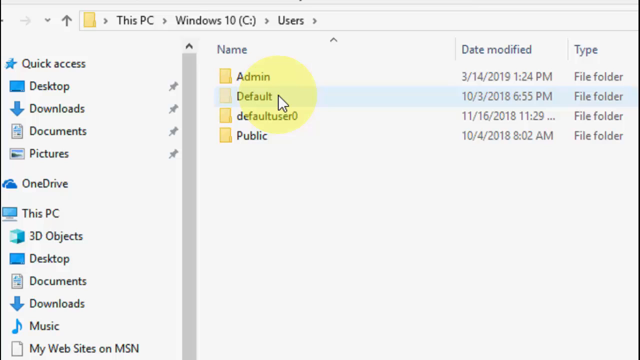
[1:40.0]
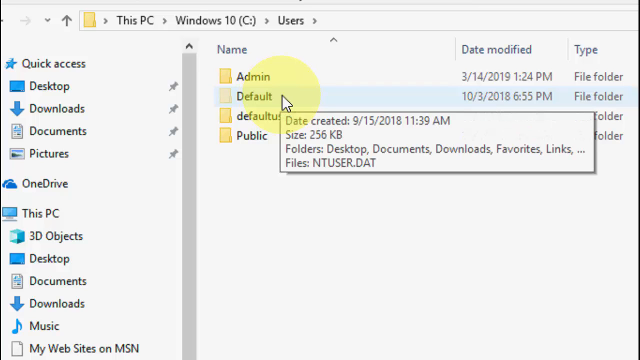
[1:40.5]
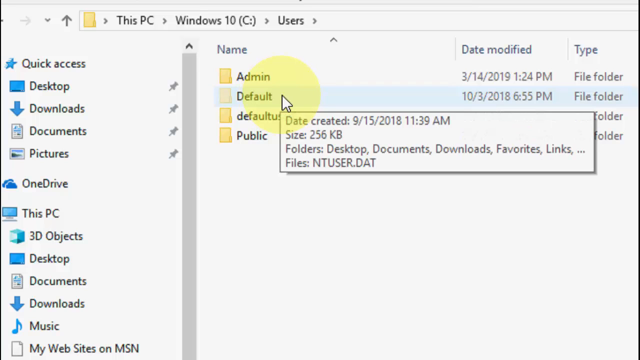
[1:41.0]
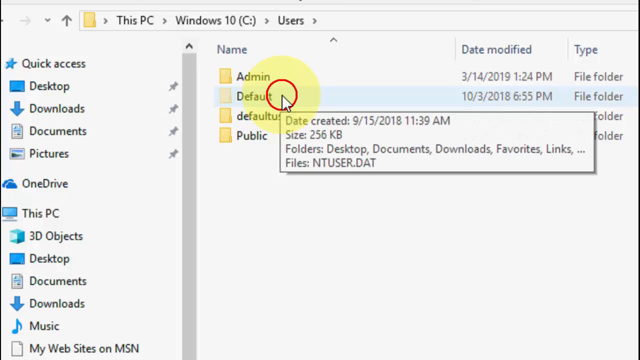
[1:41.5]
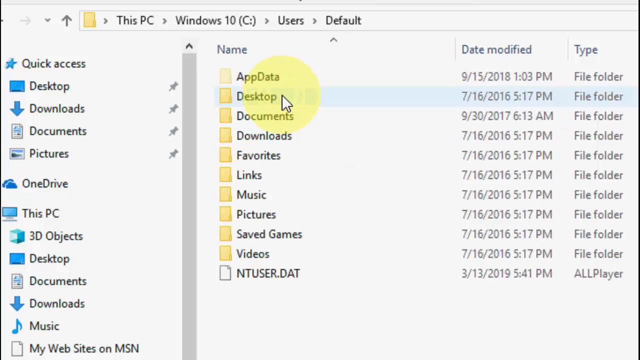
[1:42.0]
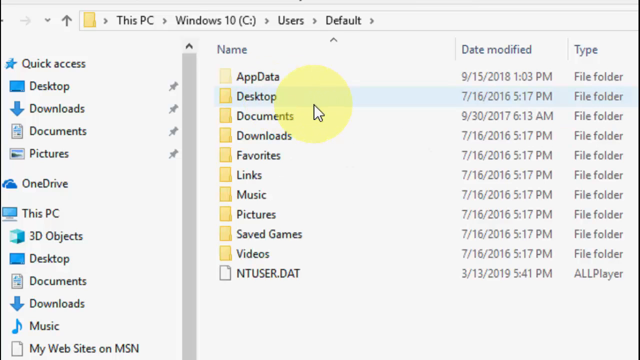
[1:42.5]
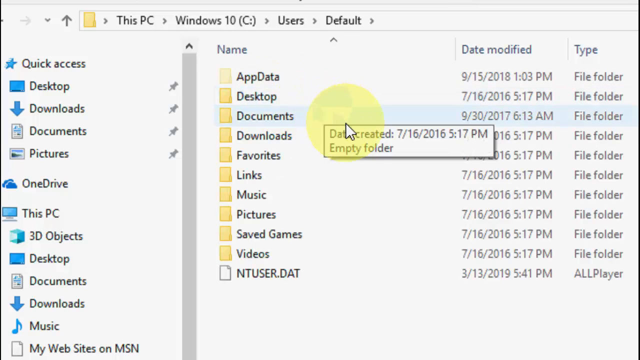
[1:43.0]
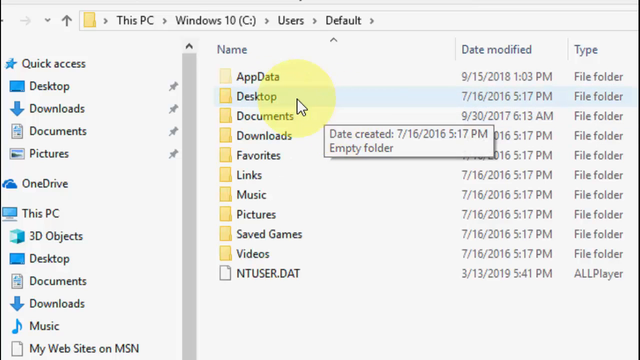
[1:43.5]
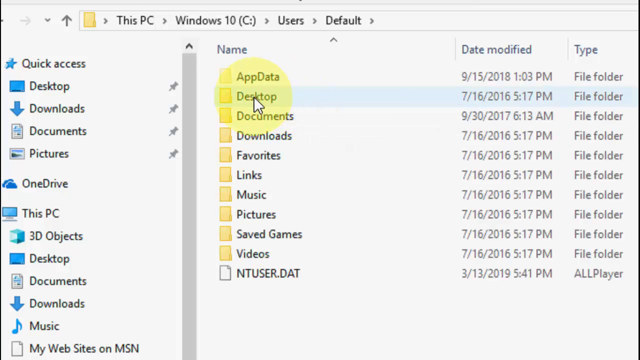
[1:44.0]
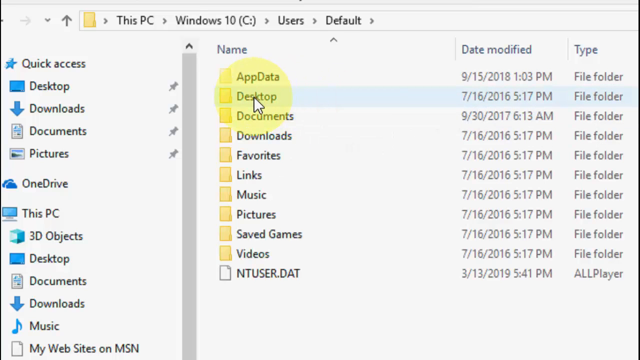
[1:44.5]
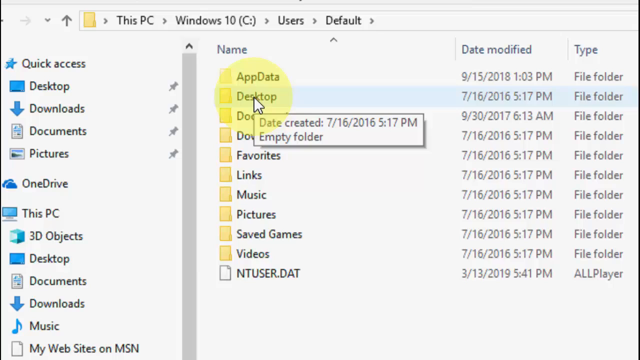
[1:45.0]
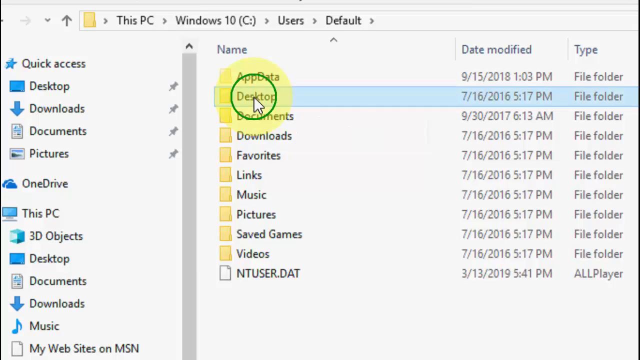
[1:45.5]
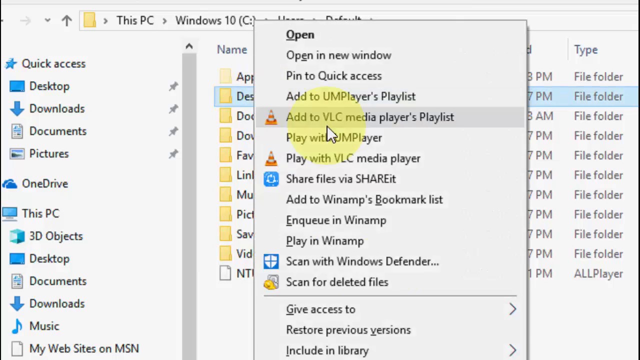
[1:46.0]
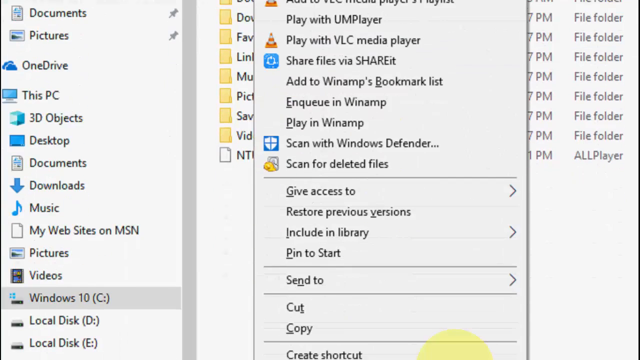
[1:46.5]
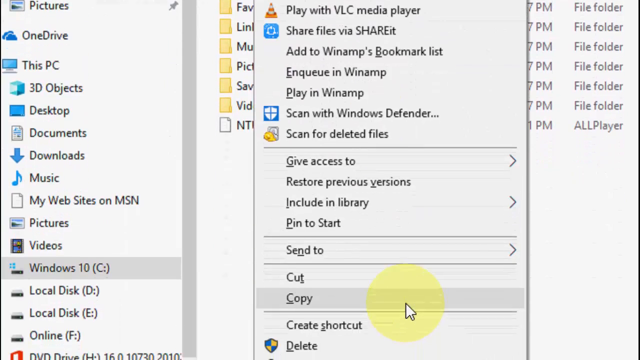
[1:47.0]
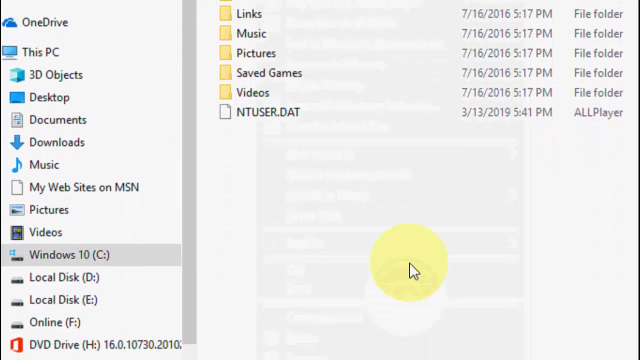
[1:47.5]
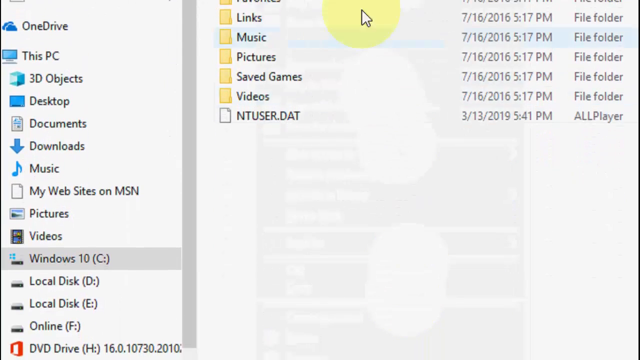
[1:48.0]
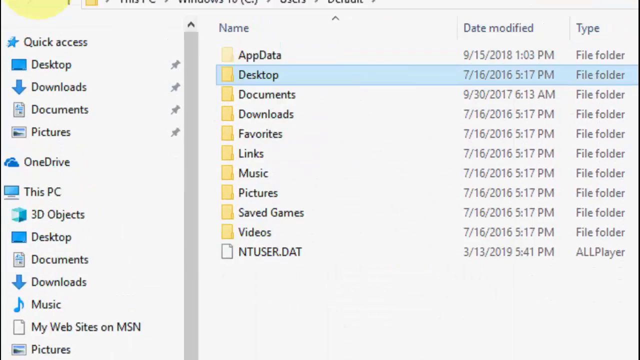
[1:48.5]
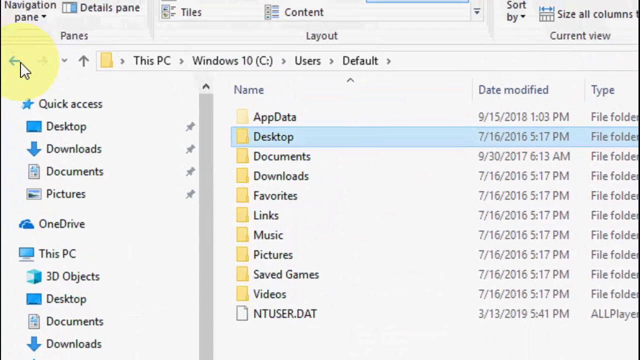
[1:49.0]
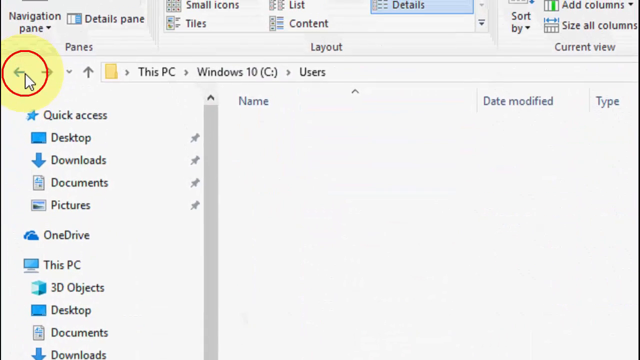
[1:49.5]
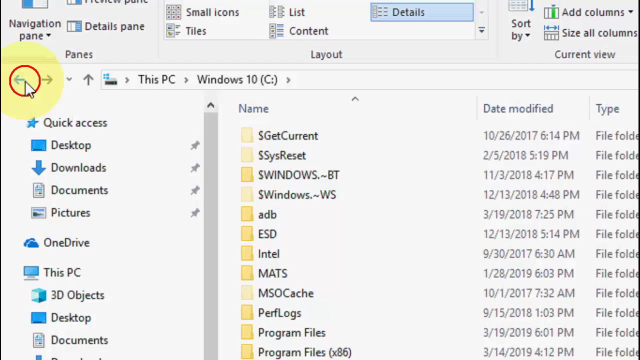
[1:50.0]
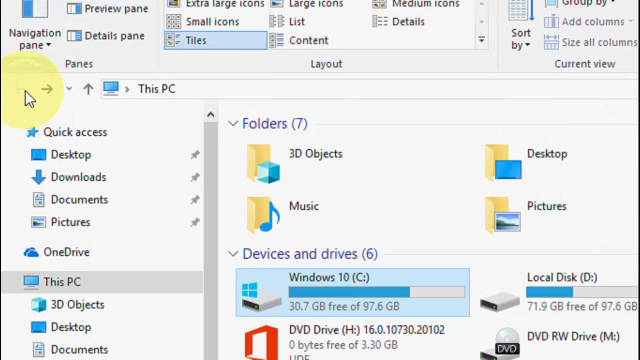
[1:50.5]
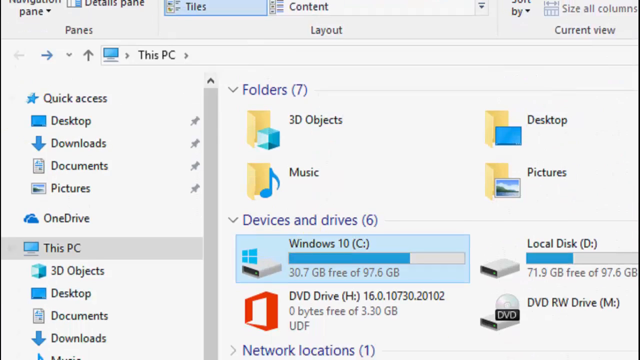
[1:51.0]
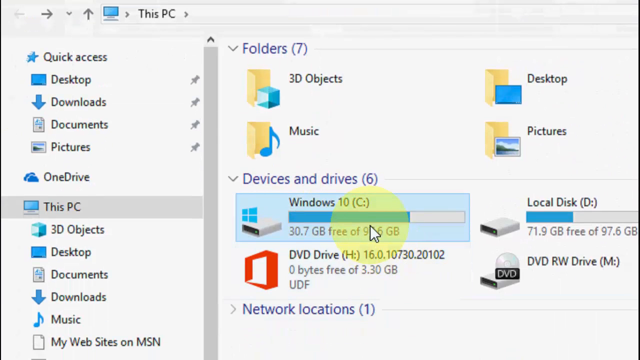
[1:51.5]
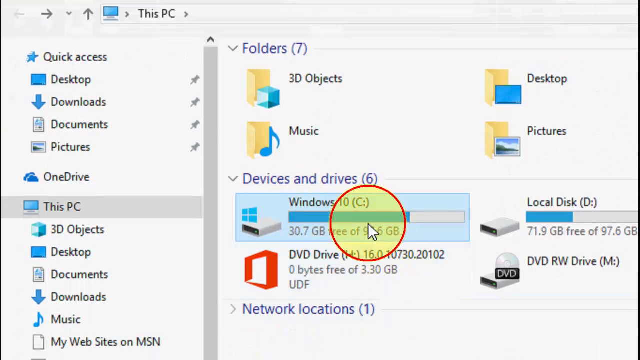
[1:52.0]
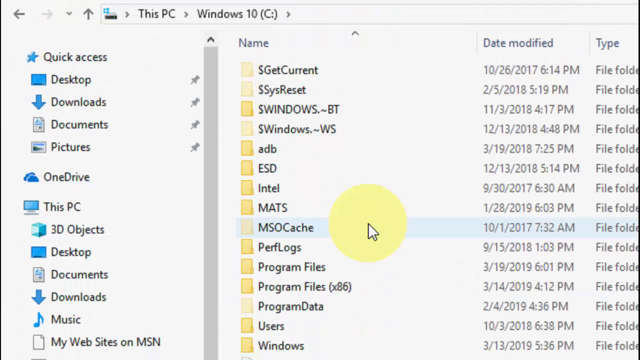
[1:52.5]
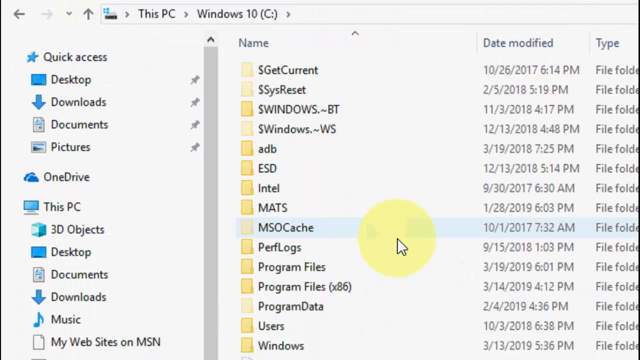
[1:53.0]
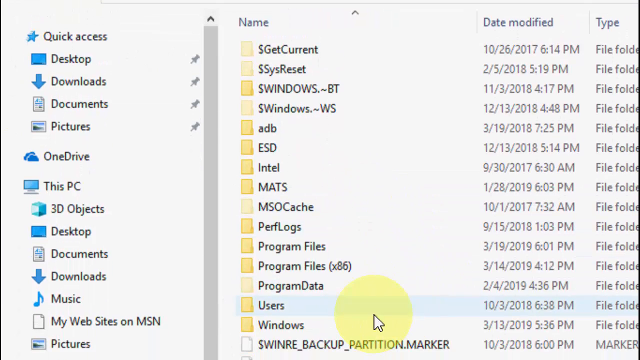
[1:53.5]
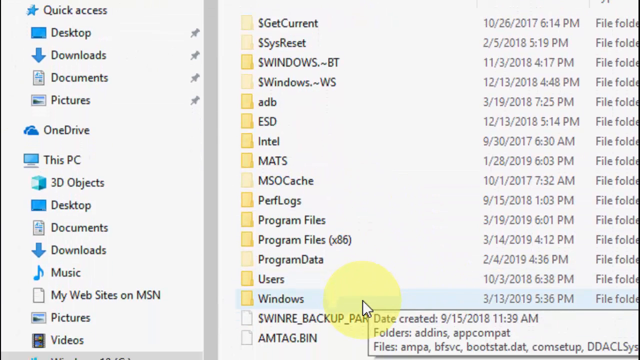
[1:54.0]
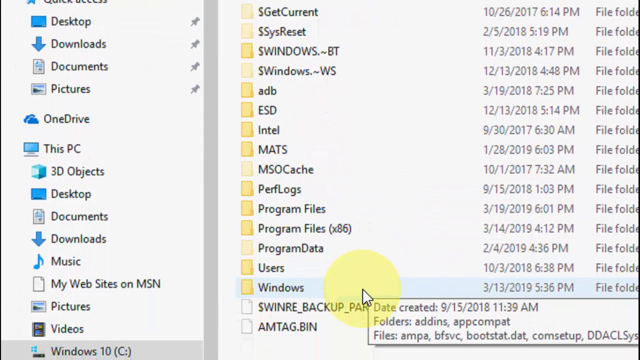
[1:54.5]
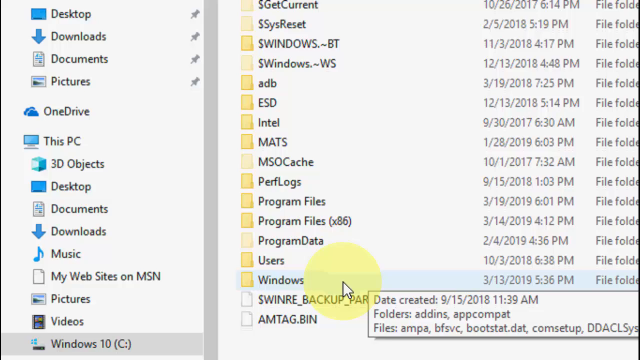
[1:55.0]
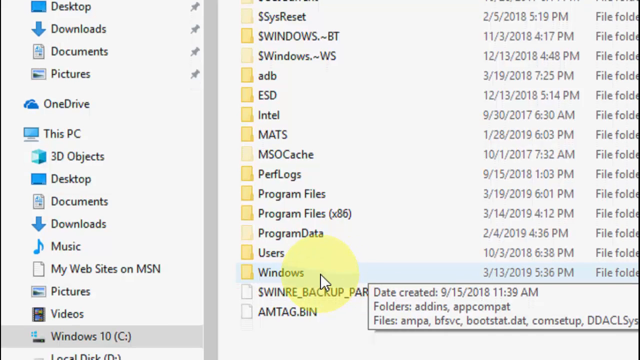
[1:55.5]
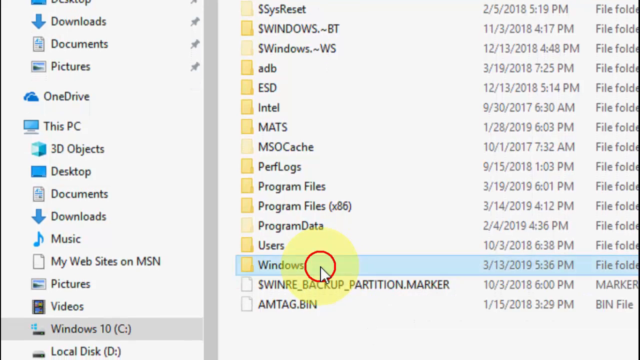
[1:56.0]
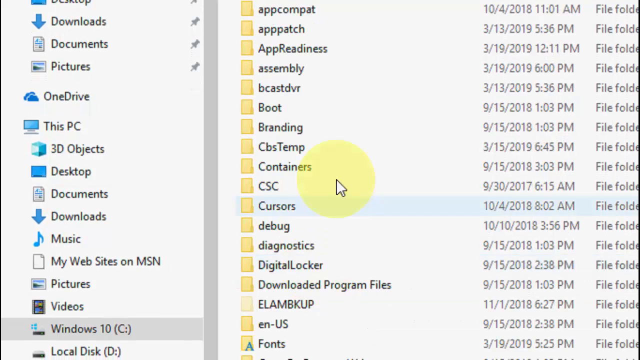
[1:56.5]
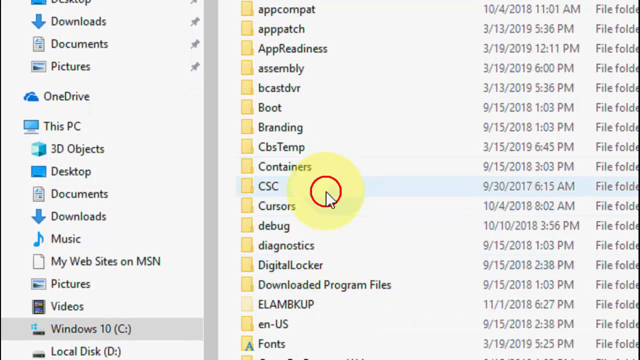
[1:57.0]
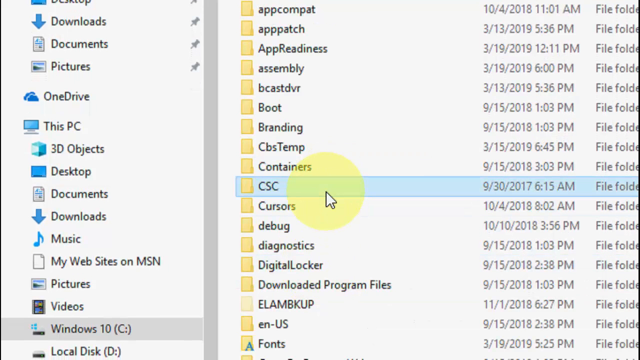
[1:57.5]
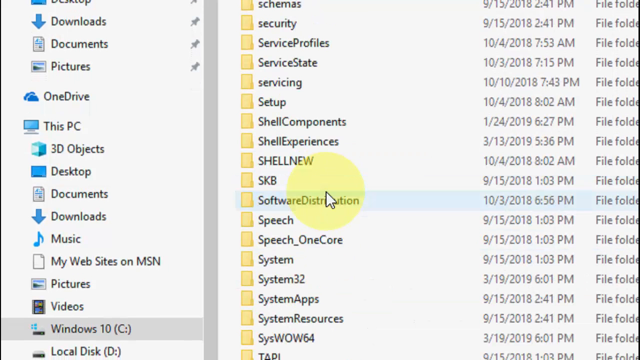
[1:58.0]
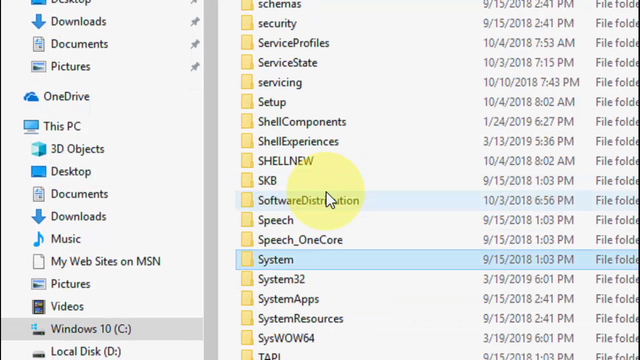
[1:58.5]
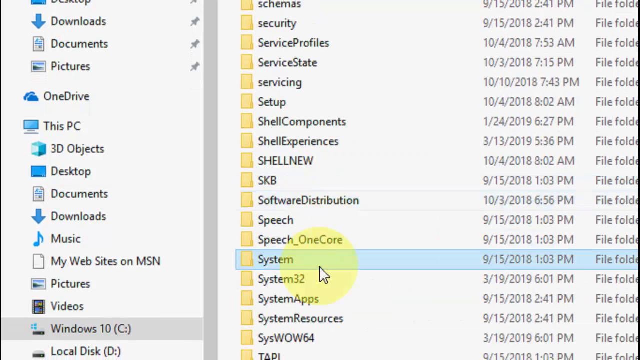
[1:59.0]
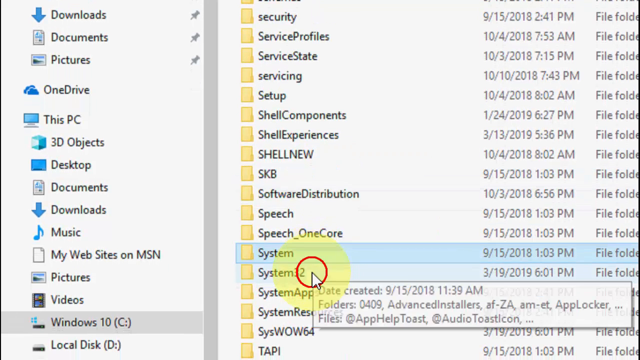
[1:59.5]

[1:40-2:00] A screen recording of a desktop computer shows open folders with the directory path this PC, Windows 10, Users. The Users folder lists four folders: admin, default, default user zero, and public. The mouse cursor, surrounded by a yellow circle, highlights default, moves around it, and double-clicks to open it, revealing multiple other folders. The cursor moves to Desktop in this folder, right-clicks it, and clicks Copy in the context menu. The user then clicks back multiple times until reaching the This PC folder, opens the Windows 10 C drive folder again, and scrolls all the way down to the Windows folder, where there is a folder named CSC. They click it, then unclick it, and click a folder named System32. They then click a folder inside called Default.